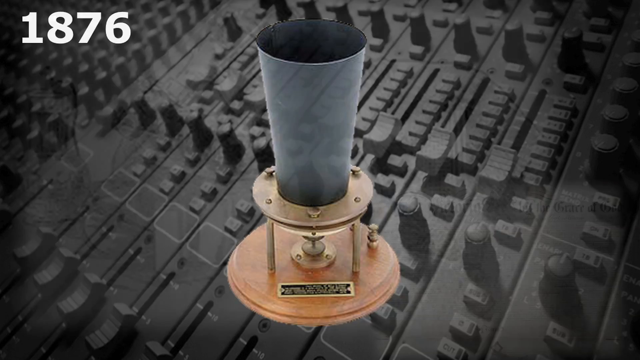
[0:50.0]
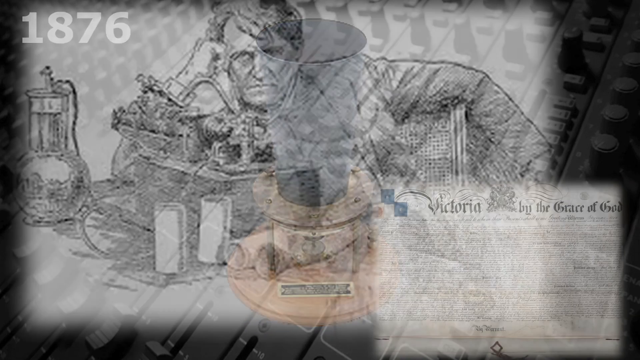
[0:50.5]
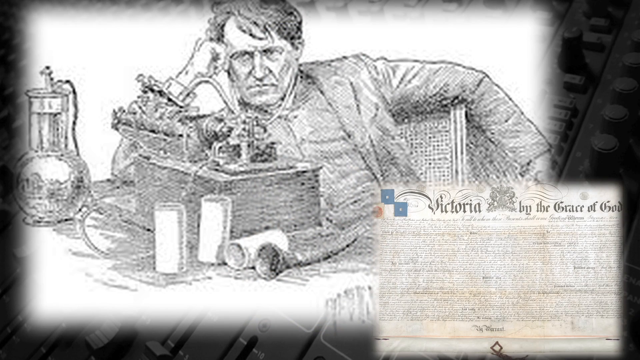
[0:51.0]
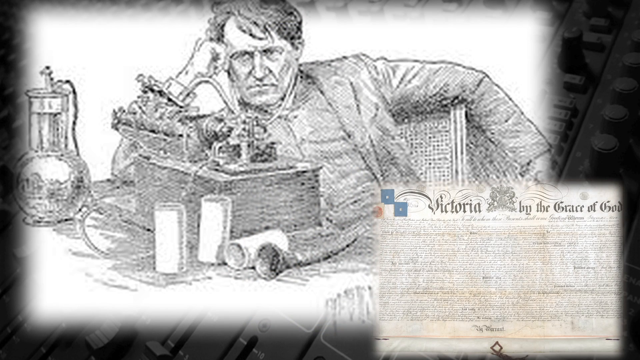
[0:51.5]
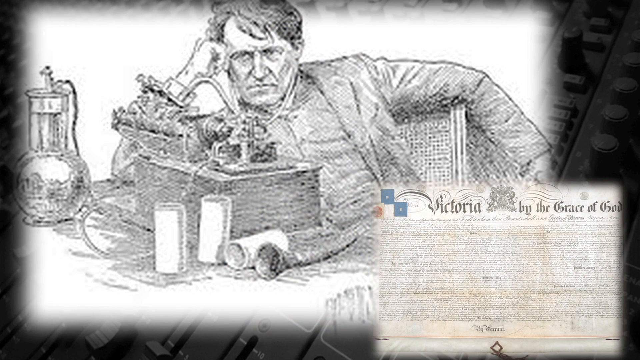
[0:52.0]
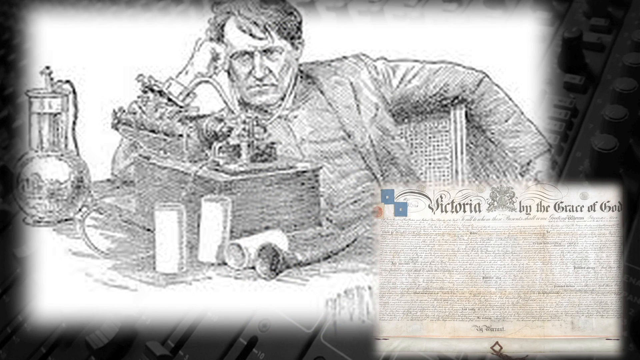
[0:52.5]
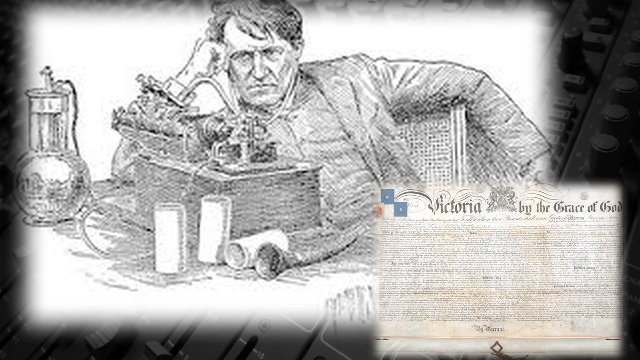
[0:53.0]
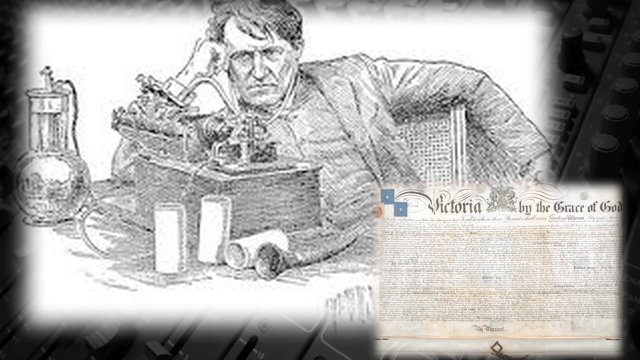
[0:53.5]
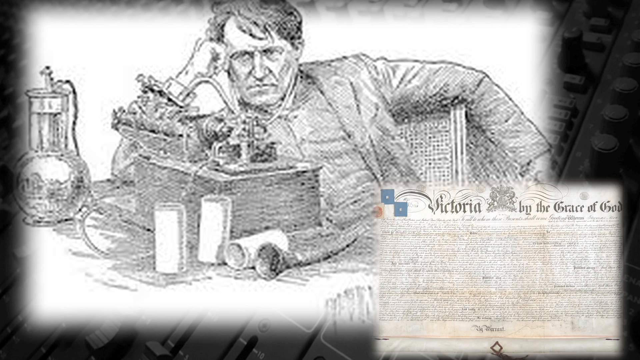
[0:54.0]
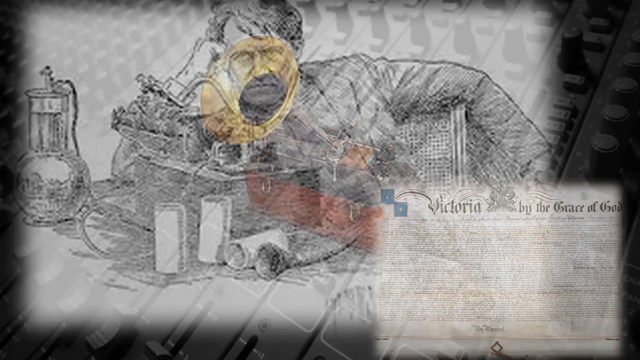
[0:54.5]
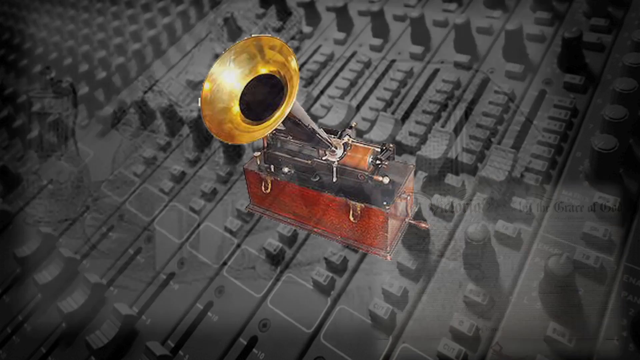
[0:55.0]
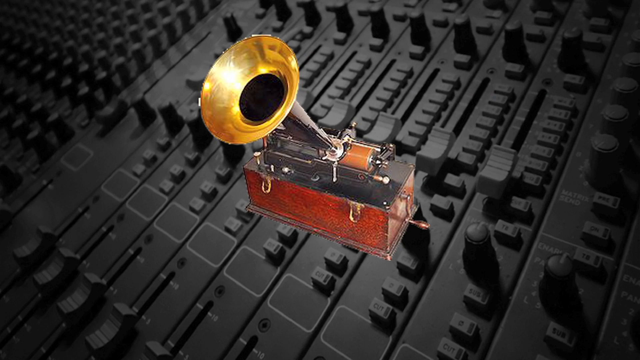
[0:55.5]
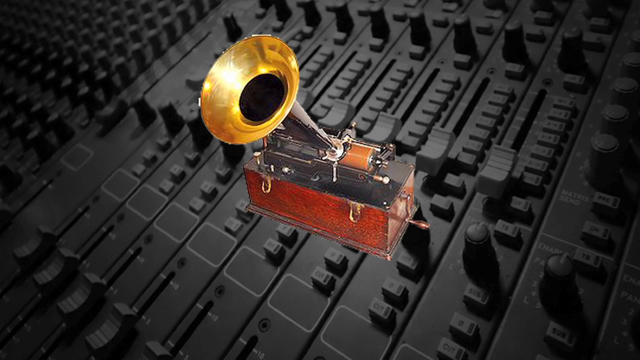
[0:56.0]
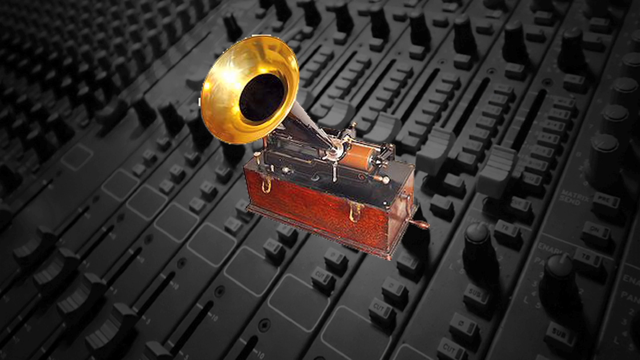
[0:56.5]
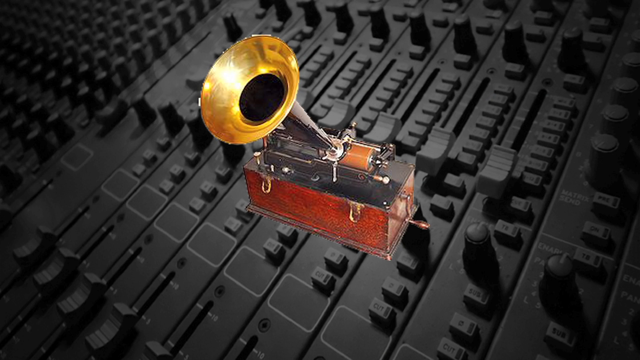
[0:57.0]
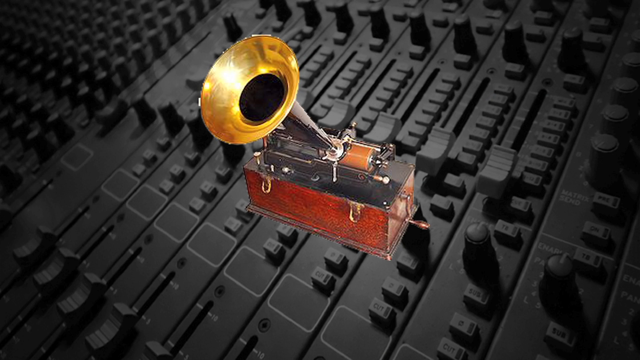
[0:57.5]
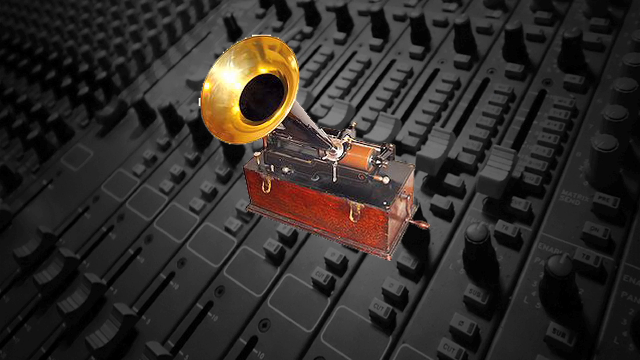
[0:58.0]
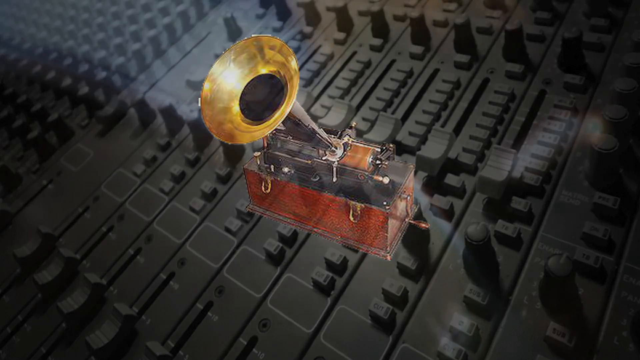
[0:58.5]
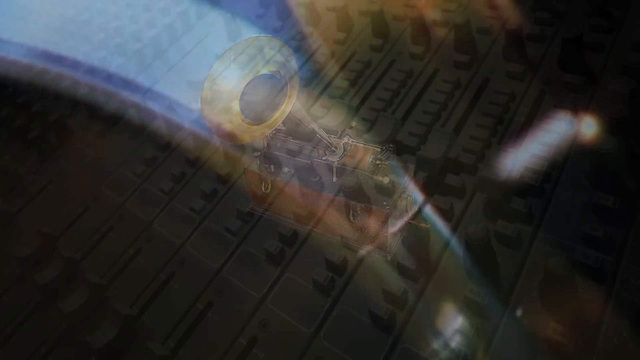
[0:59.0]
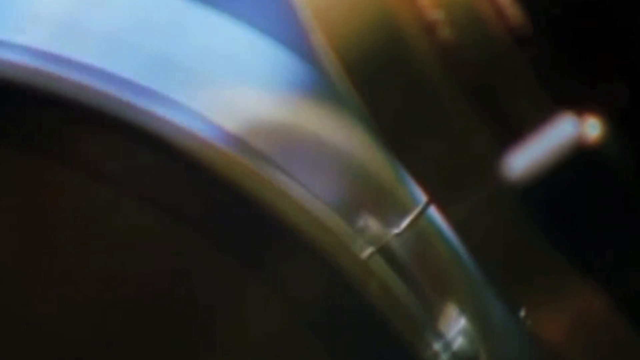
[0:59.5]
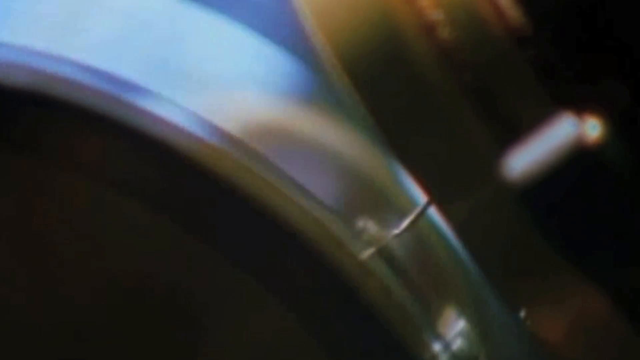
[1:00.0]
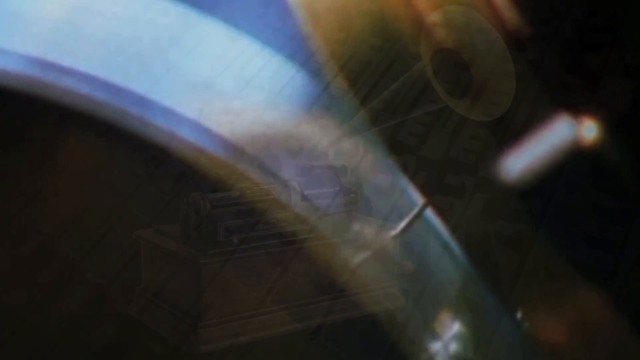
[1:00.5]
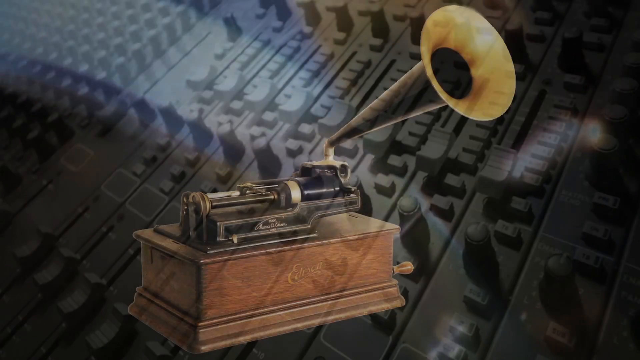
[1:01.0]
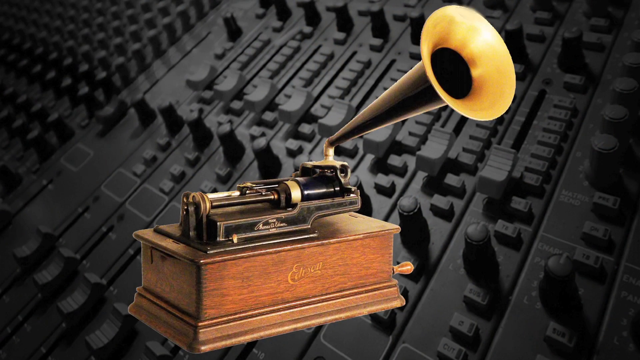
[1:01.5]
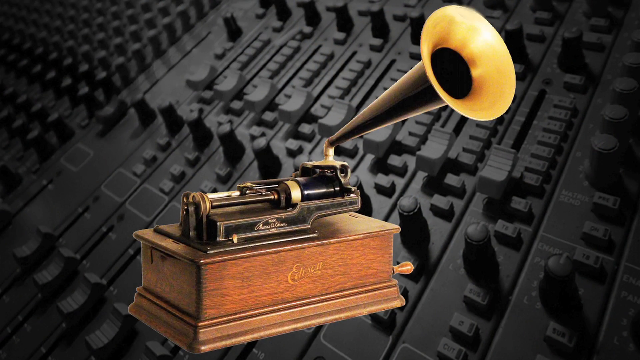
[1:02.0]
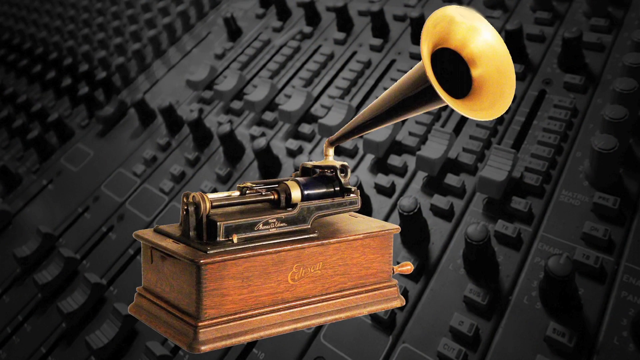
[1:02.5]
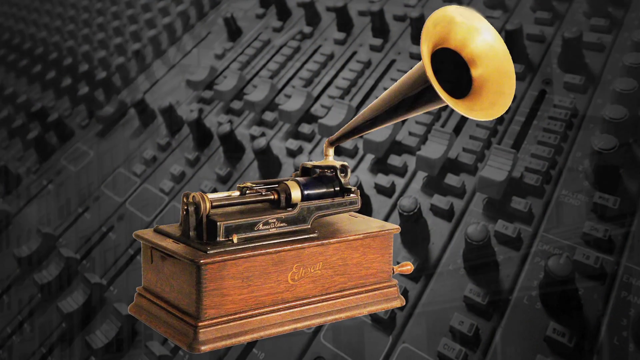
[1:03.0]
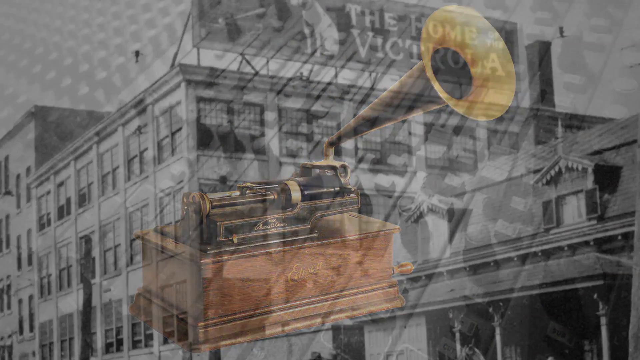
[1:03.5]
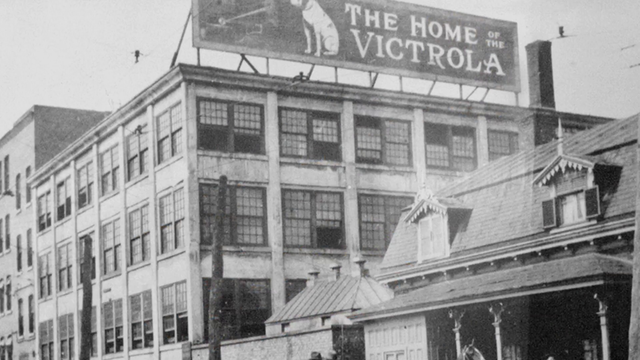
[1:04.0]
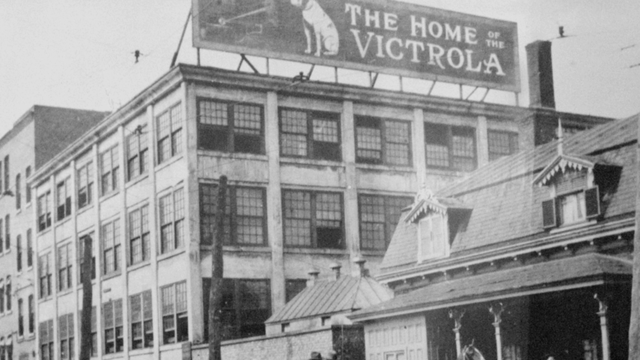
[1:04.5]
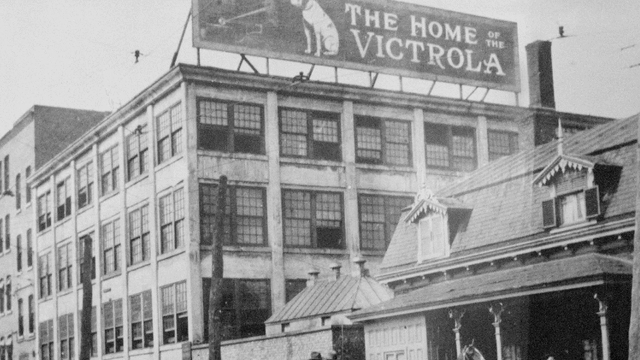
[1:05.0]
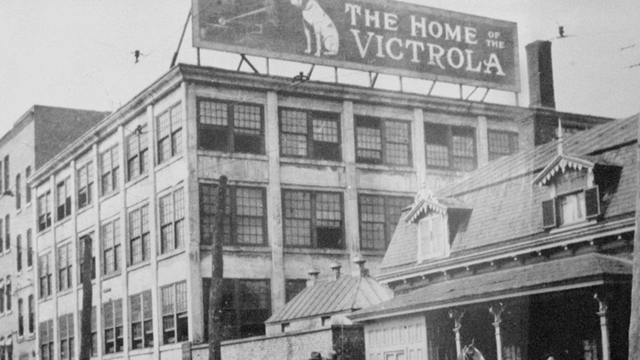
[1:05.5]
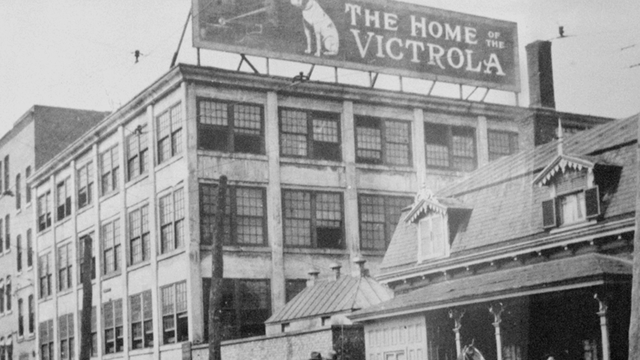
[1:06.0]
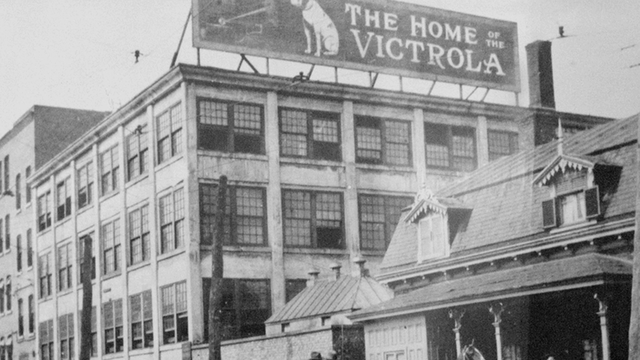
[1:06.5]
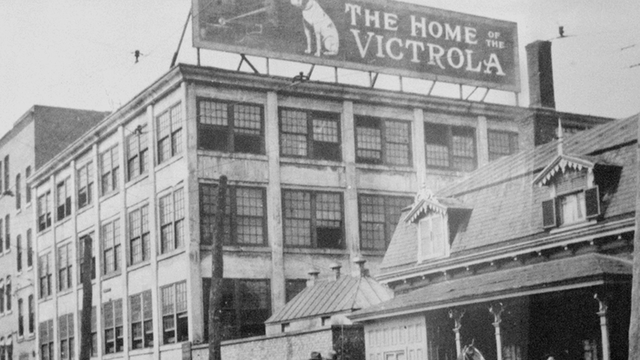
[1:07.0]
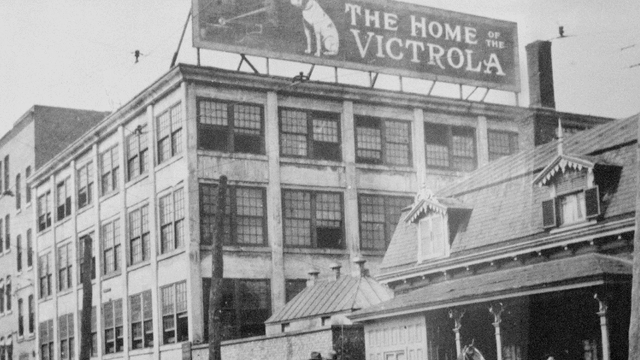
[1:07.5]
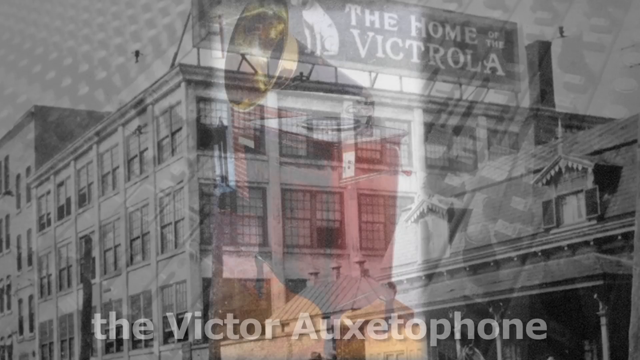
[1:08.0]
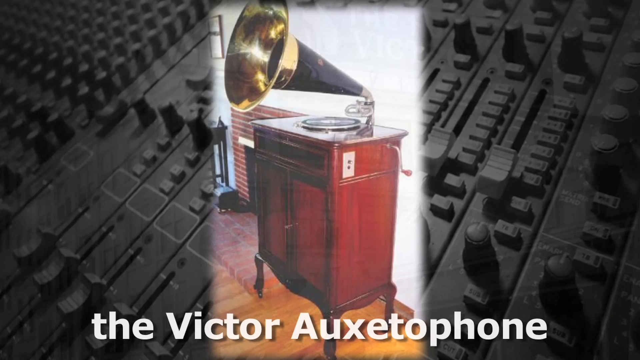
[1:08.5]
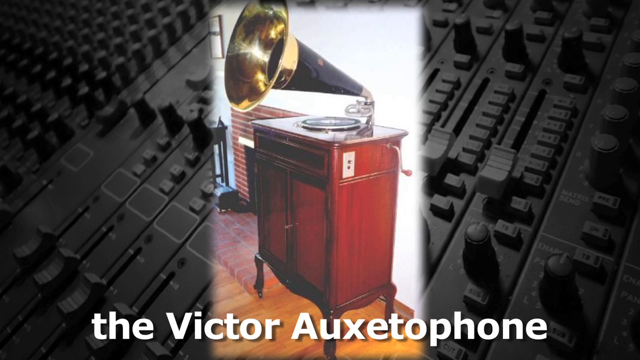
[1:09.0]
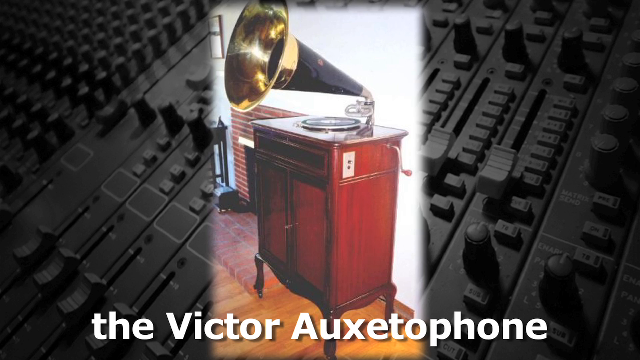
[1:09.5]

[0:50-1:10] A very rudimentary silver tube speaker from 1876 is shown against a background of a modern audio mixer. The next image is a black and white drawing from the 1800s of someone looking seriously at a machine, possibly the first speaker. In the bottom right is a news article from Victoria. The main image contains different small tubes and horns. A more modern but still antique brass trumpet speaker with a big brown box beneath it appears, again with the black modern audio mixer as the background. What looks like the part of a speaker that is the needle that reads music is shown, and another similar image of a speaker loads. A black and white image appears of a "The Home of the Victrola" sign on top of a large factory building. The final picture is of the Victor Auxetophone, a slightly newer-looking speaker.